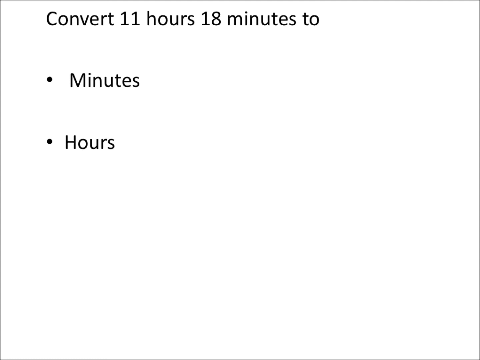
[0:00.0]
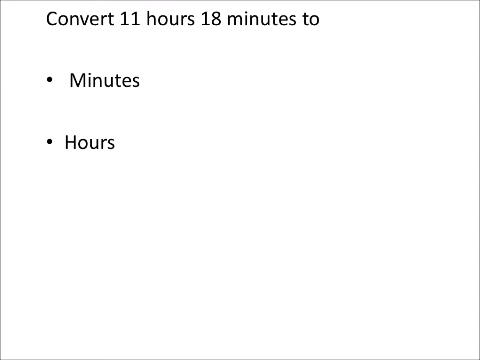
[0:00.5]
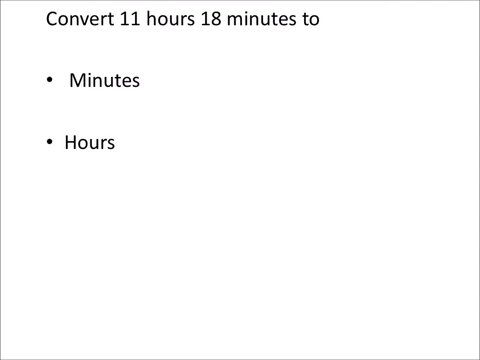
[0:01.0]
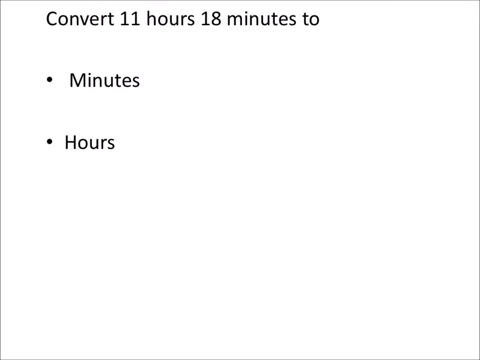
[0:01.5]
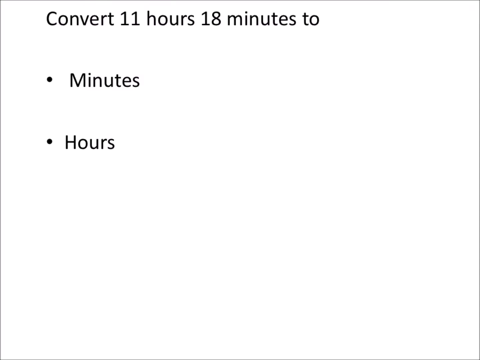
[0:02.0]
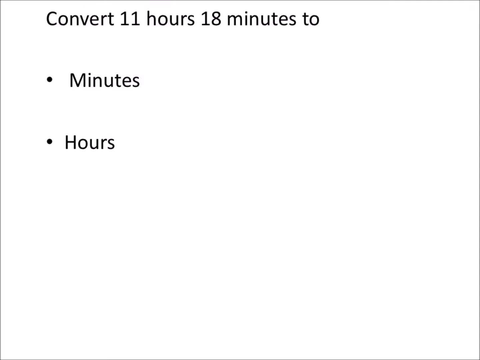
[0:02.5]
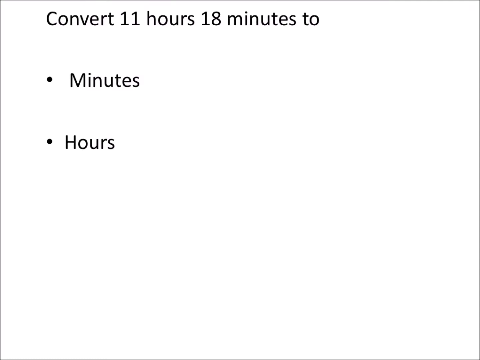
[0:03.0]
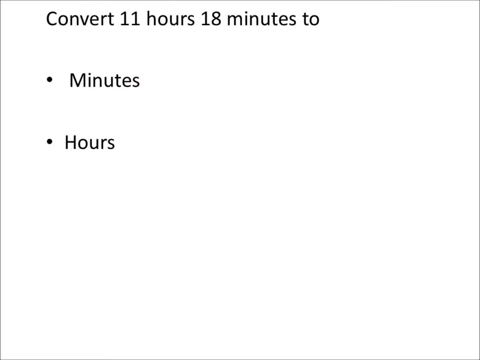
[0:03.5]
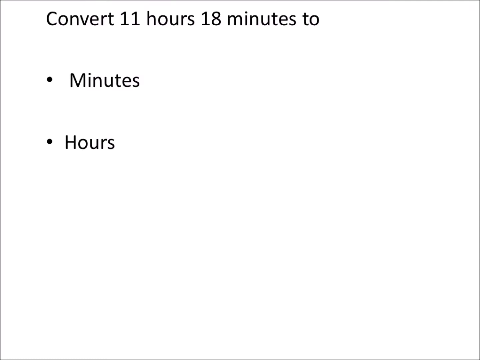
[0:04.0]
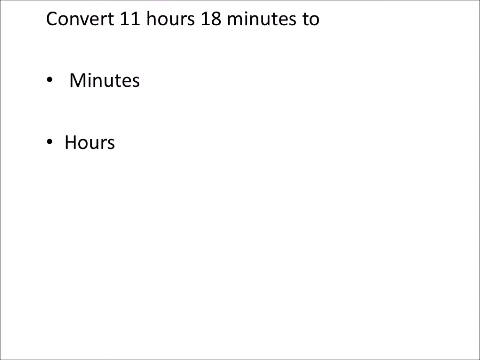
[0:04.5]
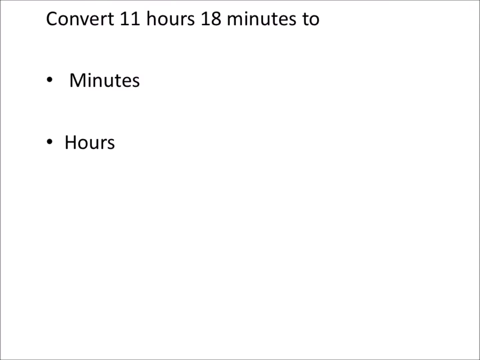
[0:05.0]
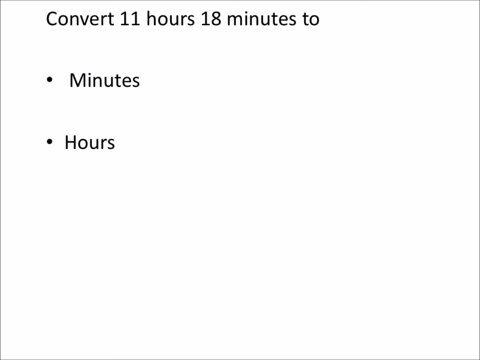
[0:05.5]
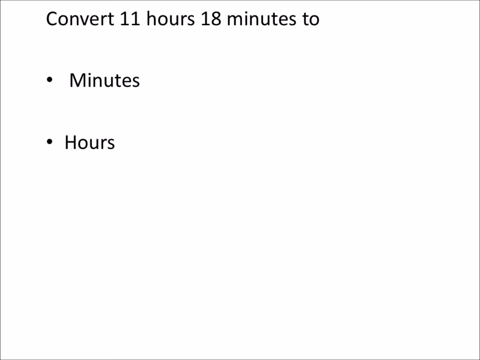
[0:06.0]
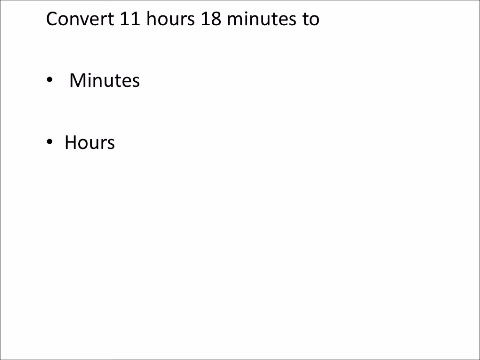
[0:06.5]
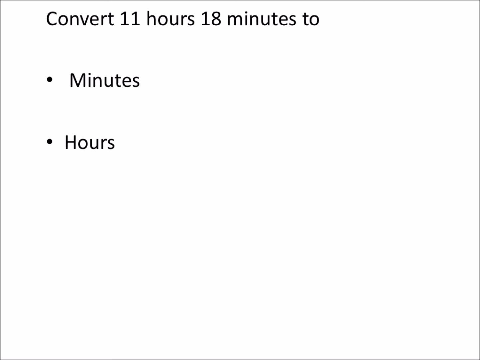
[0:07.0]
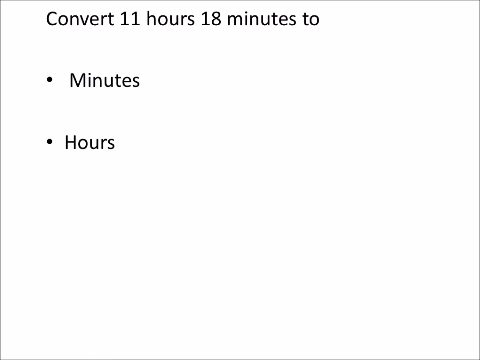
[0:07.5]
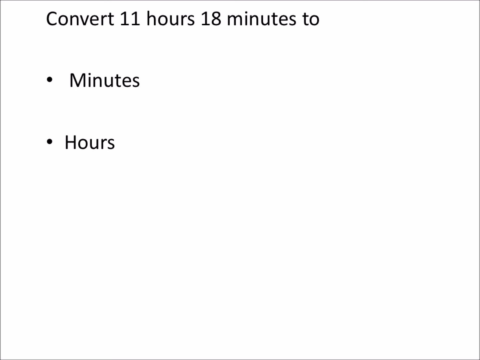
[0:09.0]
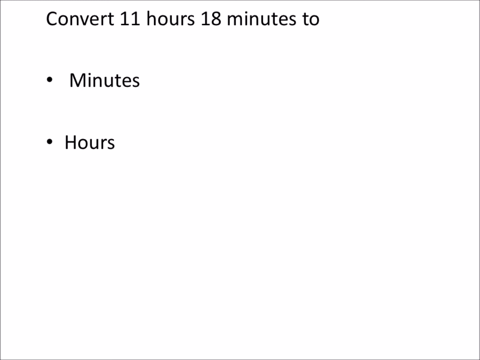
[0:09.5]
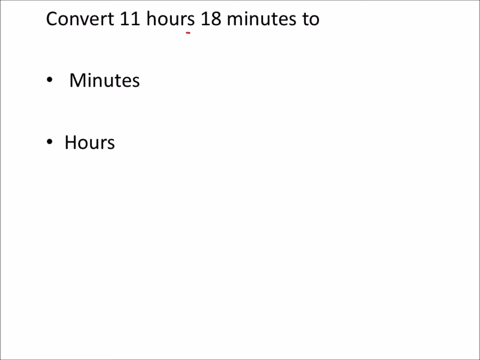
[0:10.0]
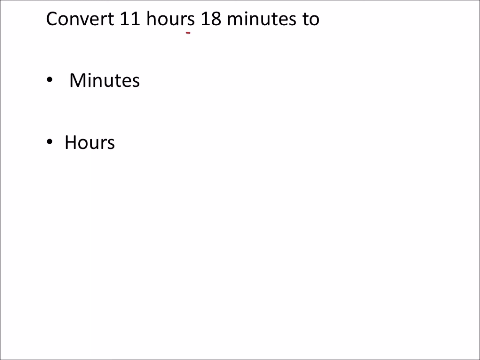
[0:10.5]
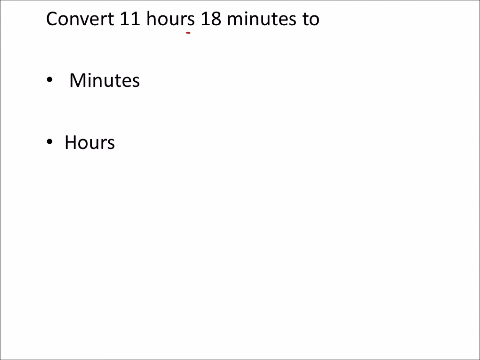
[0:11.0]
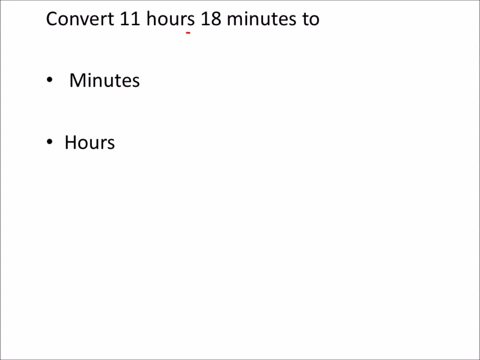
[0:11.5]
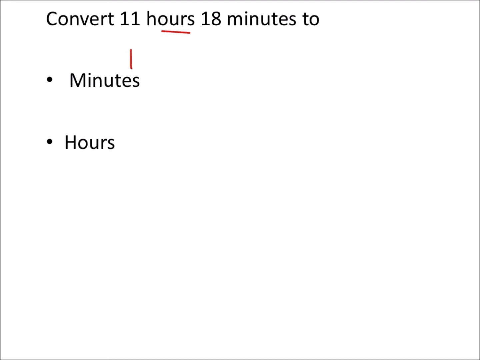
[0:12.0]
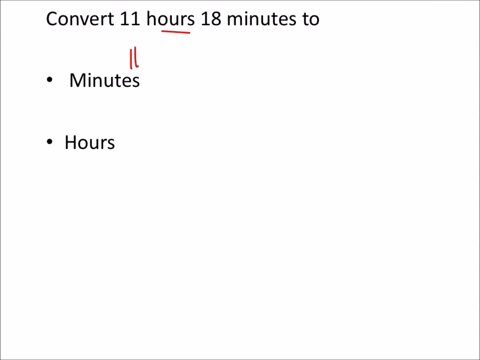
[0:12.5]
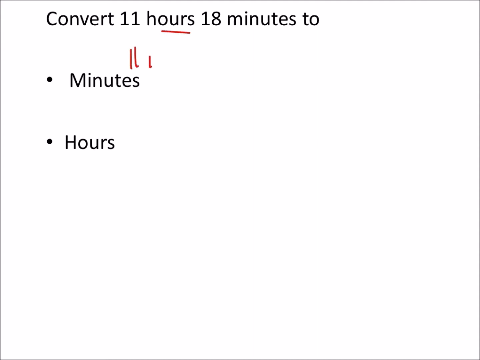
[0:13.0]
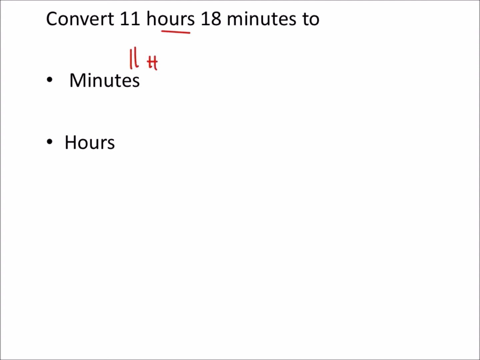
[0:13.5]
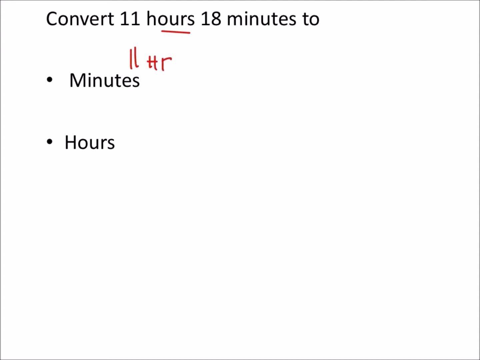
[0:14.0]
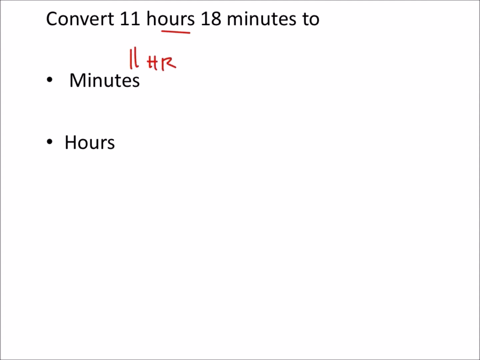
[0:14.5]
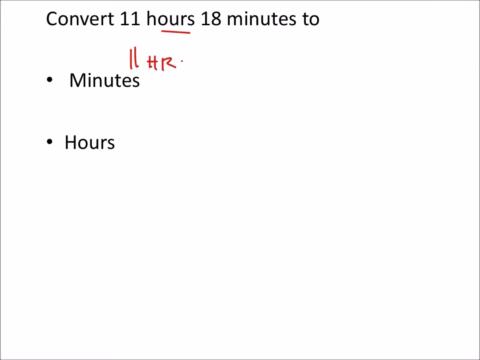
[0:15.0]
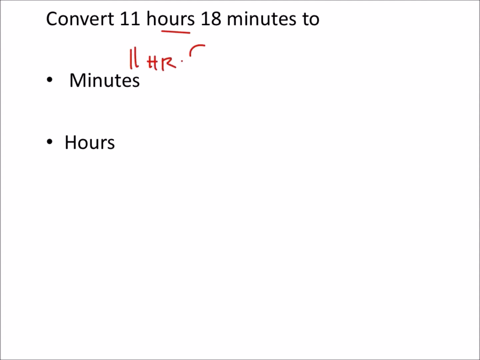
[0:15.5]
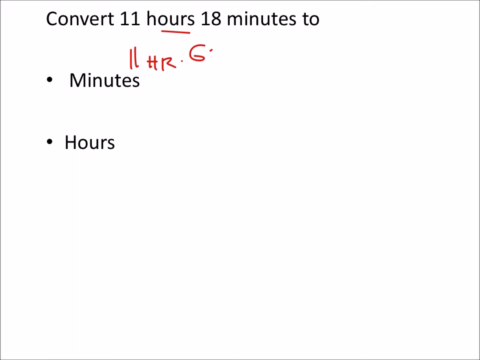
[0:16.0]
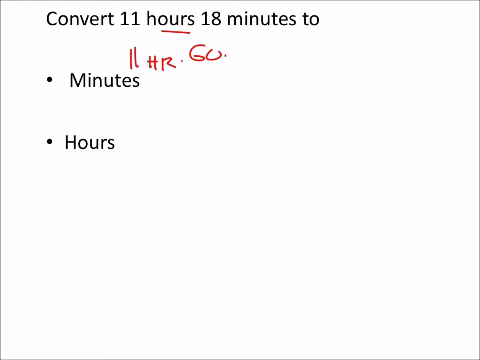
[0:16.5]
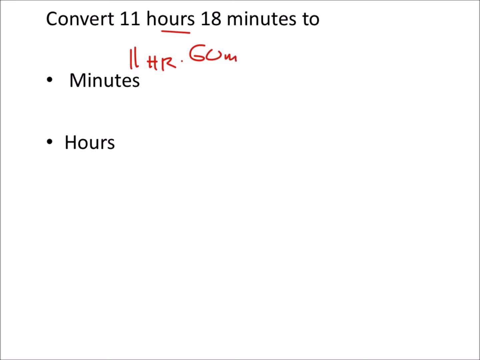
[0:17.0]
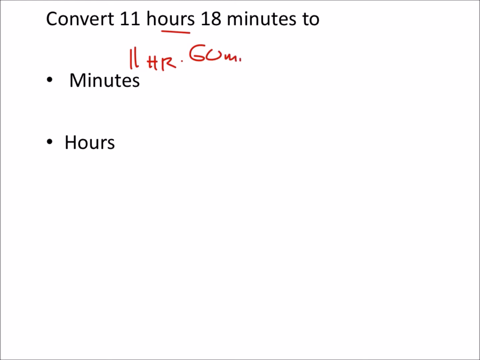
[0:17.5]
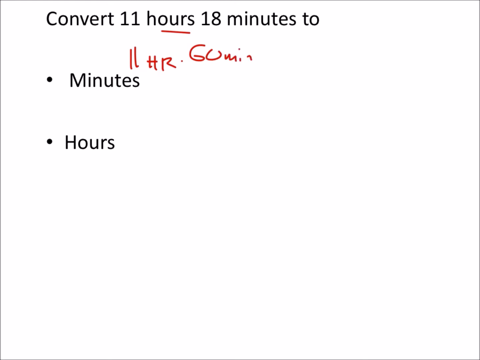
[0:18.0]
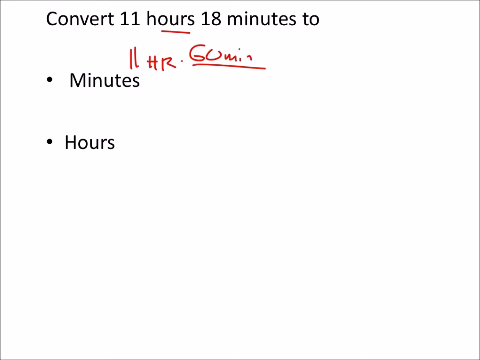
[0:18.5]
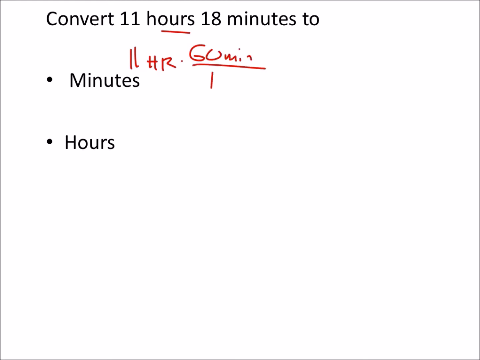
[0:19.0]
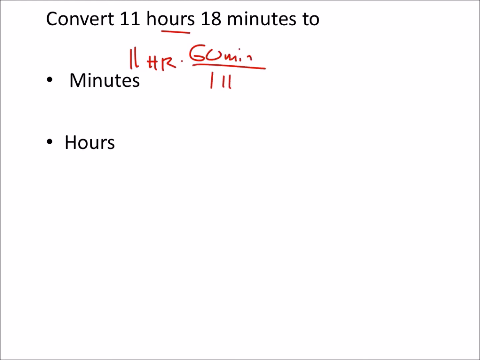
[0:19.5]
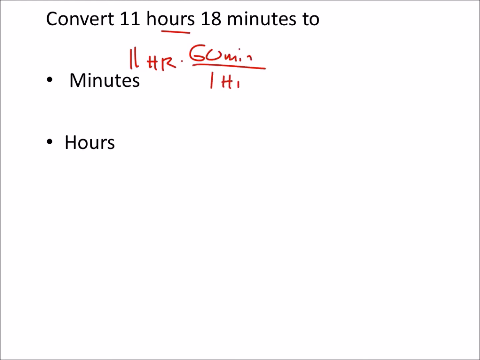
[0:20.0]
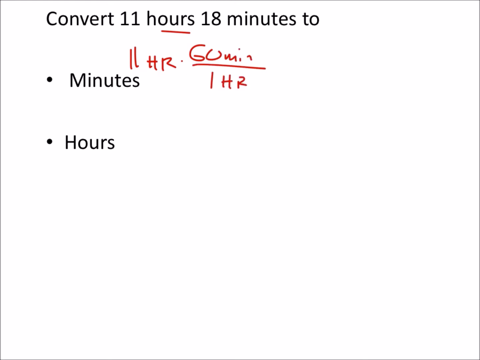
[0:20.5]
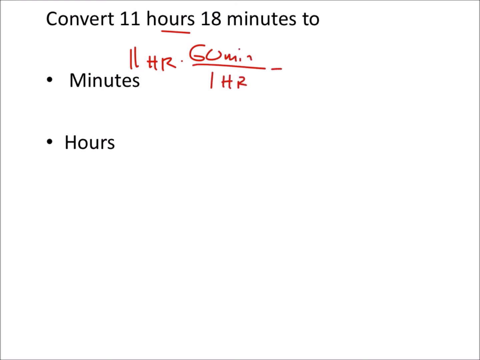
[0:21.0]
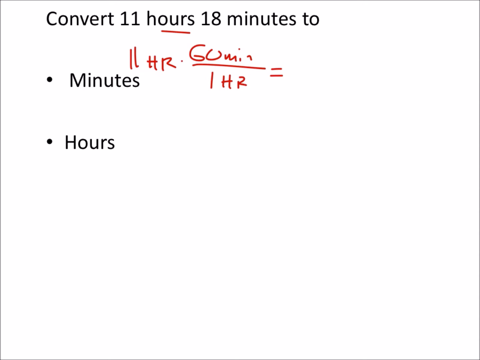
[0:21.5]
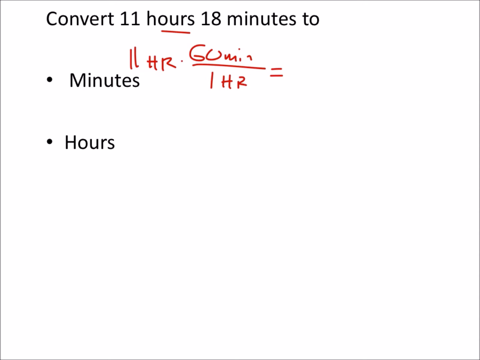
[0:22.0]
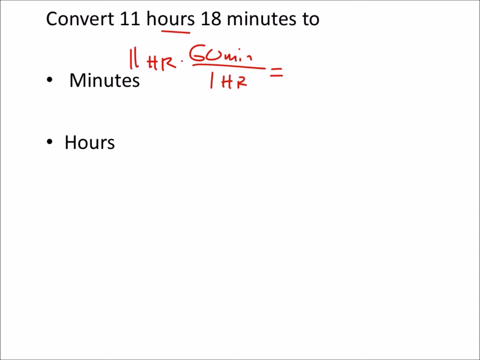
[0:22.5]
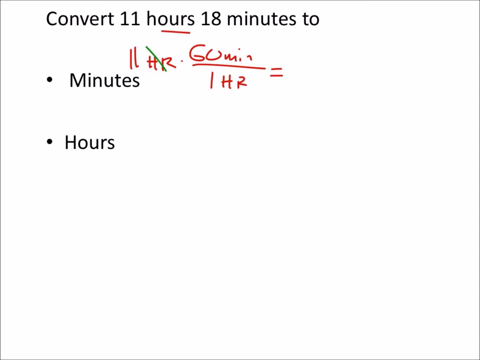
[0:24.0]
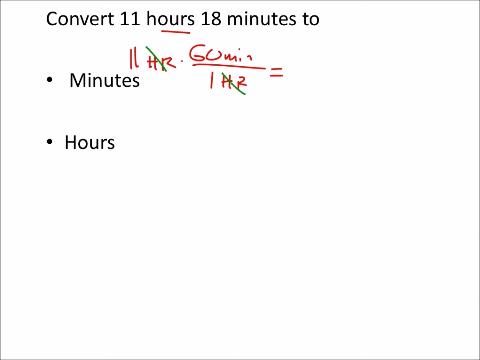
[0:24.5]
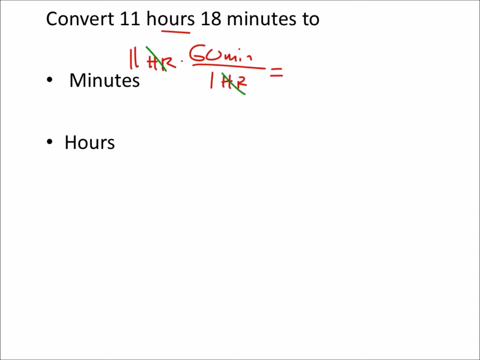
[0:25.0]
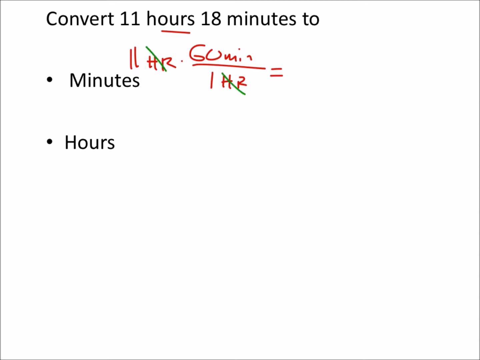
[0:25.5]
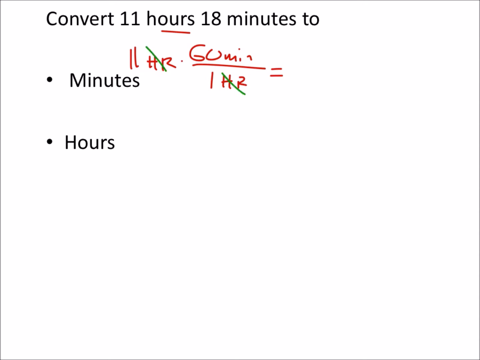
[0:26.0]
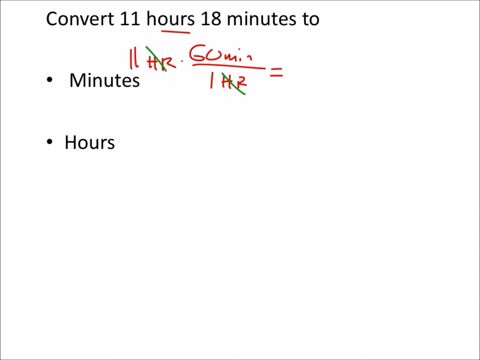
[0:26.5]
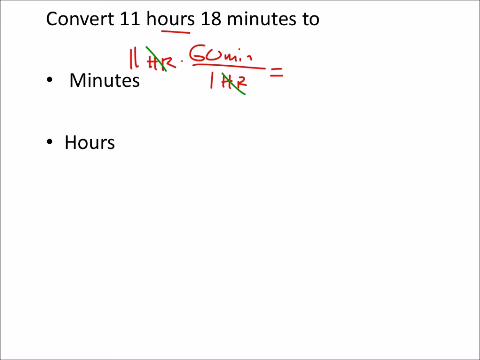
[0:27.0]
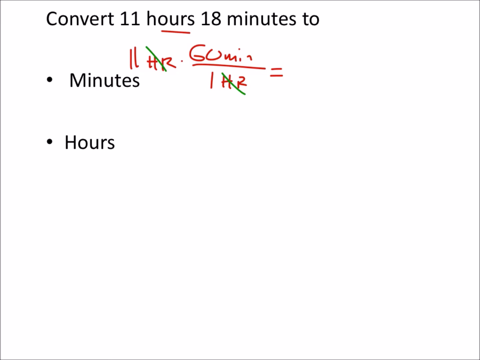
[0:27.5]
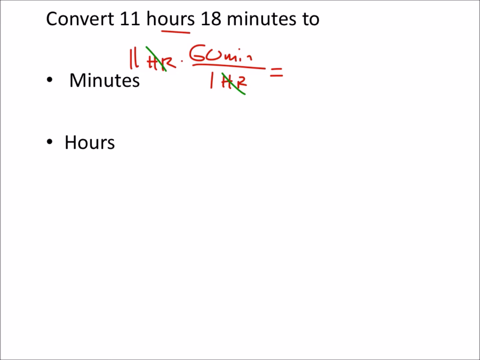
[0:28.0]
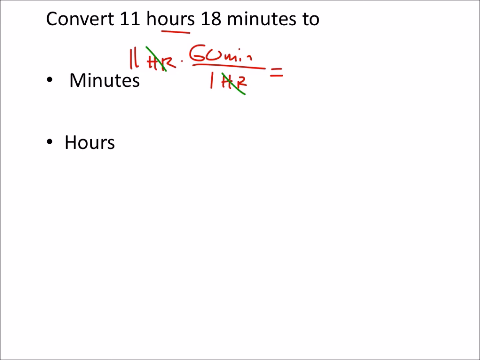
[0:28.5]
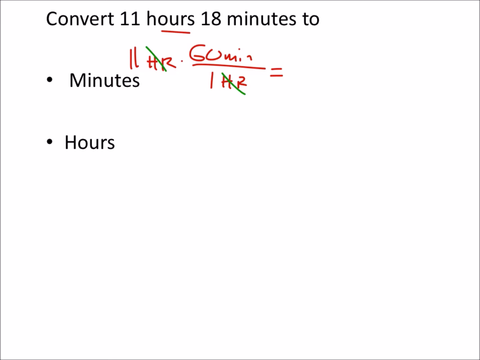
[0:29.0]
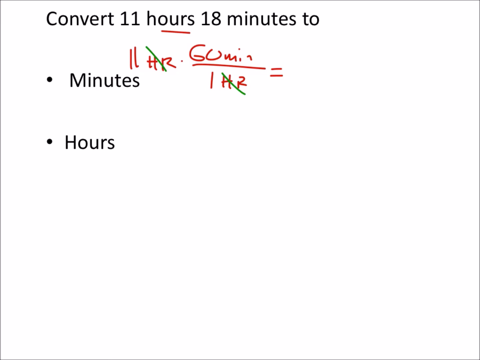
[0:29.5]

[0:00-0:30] Against a white background, black text at the top of the screen reads "convert 11 hours 18 minutes to". Underneath is a bullet point labeled "minutes", then some white space, and below that another bullet point labeled "hours", so the question seems to want the answer given both in minutes and in hours. A thin brown line underlines the word "hours" in the top sentence. Next to the "minutes" bullet point, writing in brown marker-like text reads "11 HR times 60 min over 1 HR equals". The "HR" next to 11 and the one in the denominator of the fraction after the 1 are both slashed with a green line.